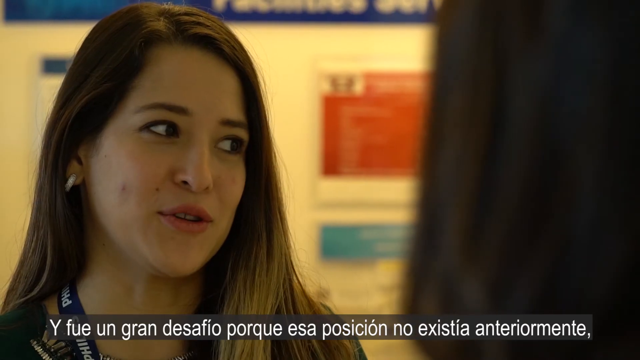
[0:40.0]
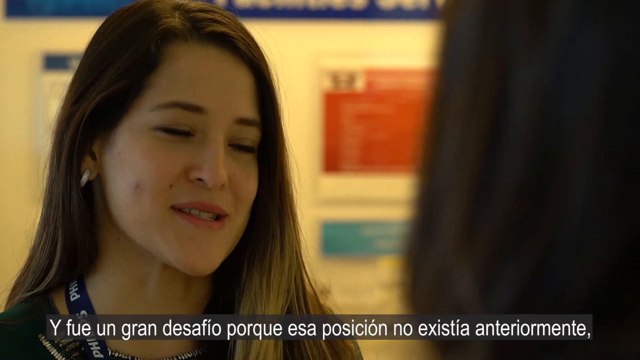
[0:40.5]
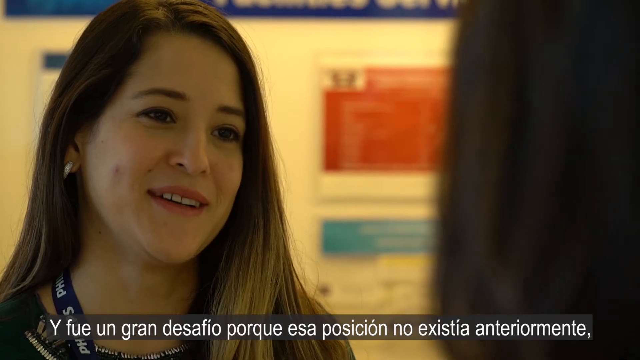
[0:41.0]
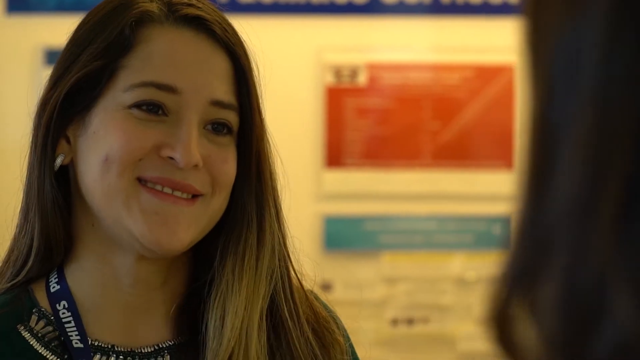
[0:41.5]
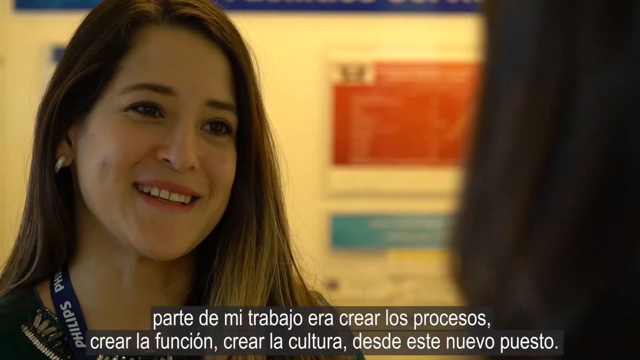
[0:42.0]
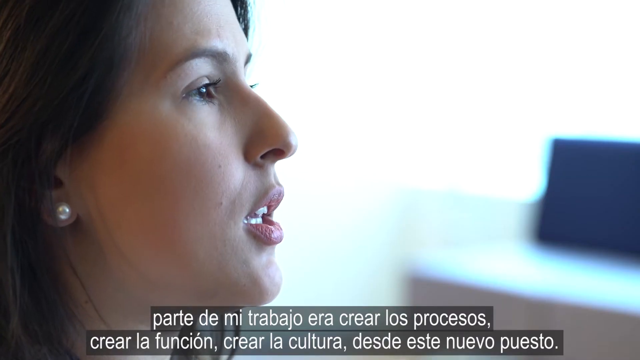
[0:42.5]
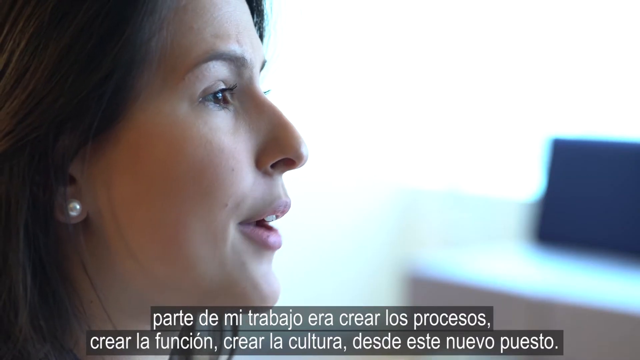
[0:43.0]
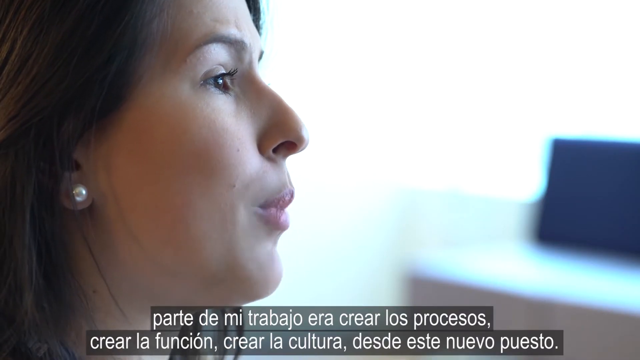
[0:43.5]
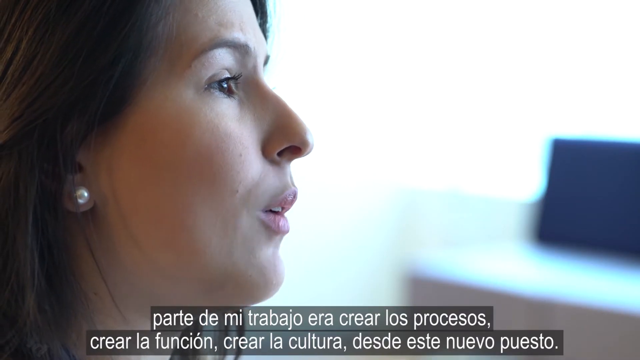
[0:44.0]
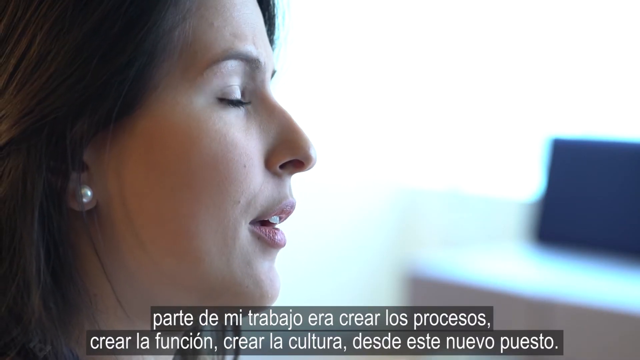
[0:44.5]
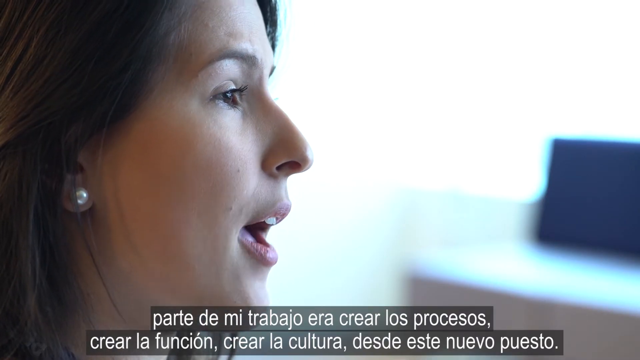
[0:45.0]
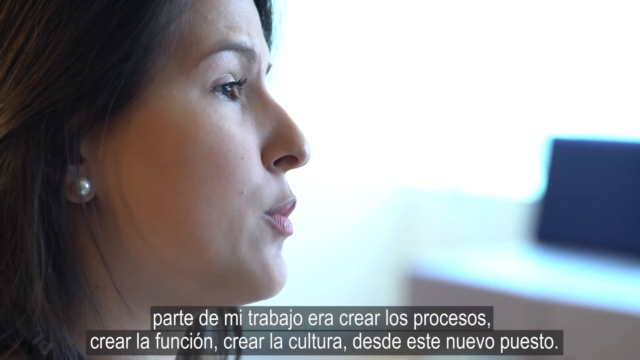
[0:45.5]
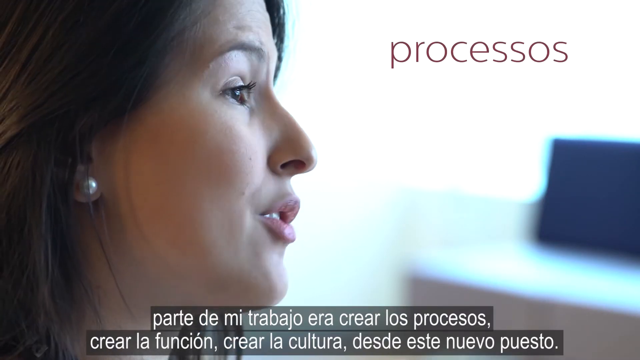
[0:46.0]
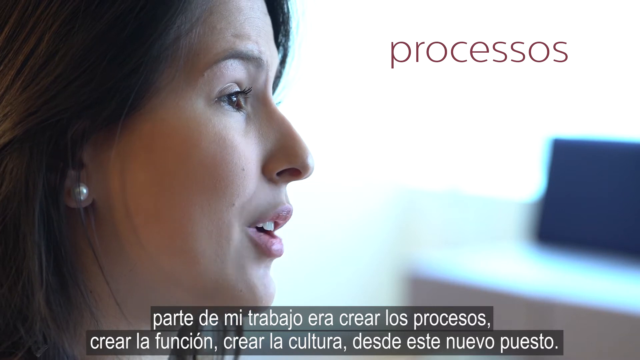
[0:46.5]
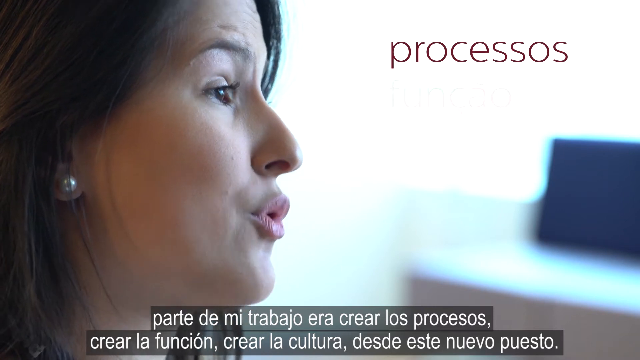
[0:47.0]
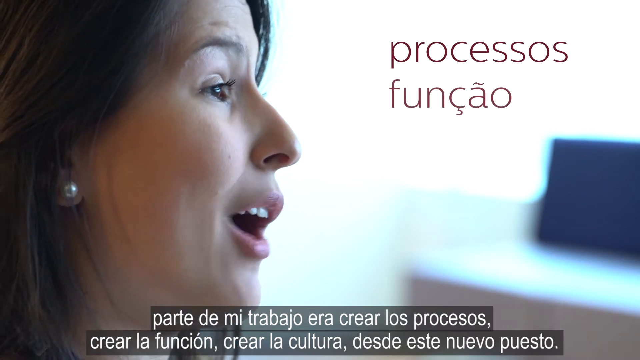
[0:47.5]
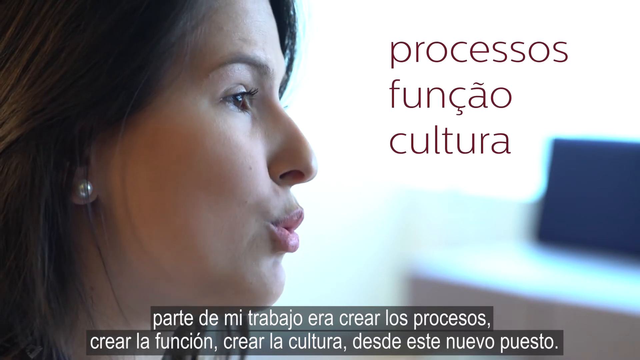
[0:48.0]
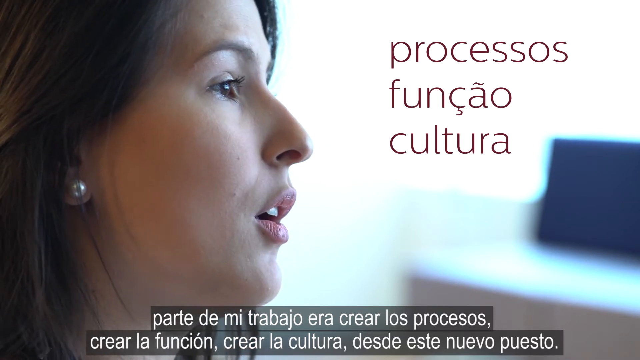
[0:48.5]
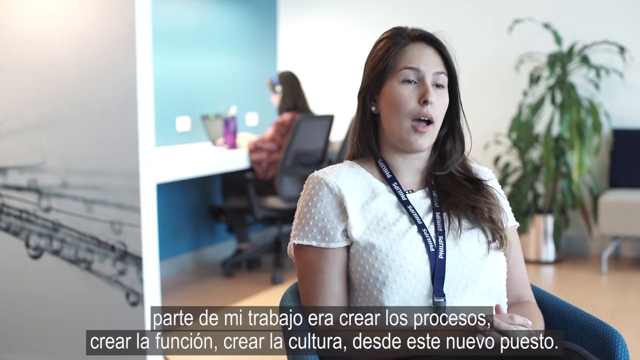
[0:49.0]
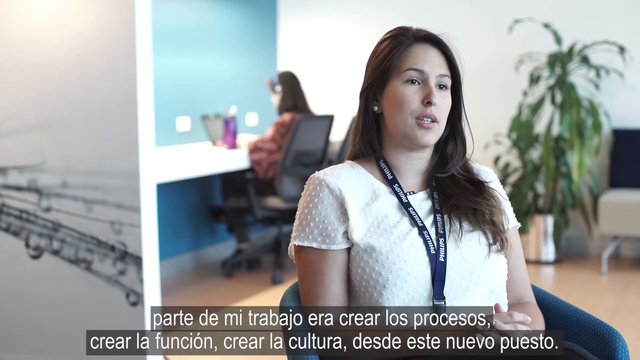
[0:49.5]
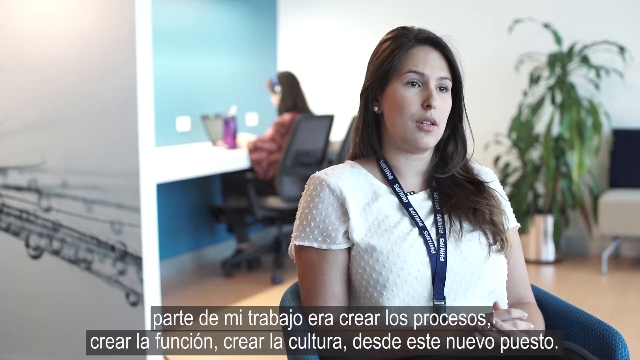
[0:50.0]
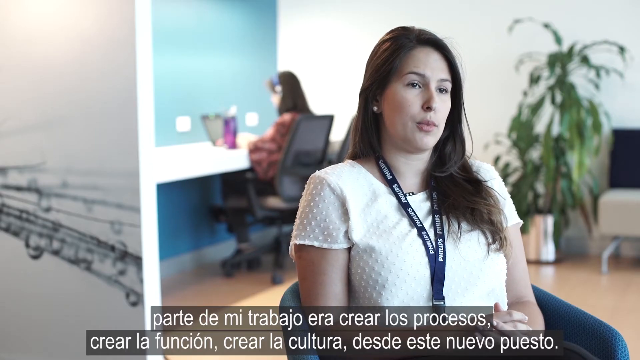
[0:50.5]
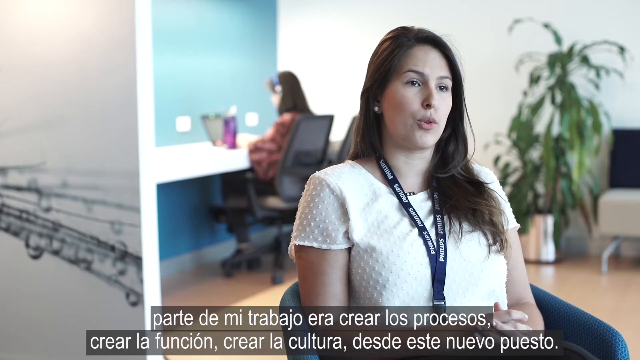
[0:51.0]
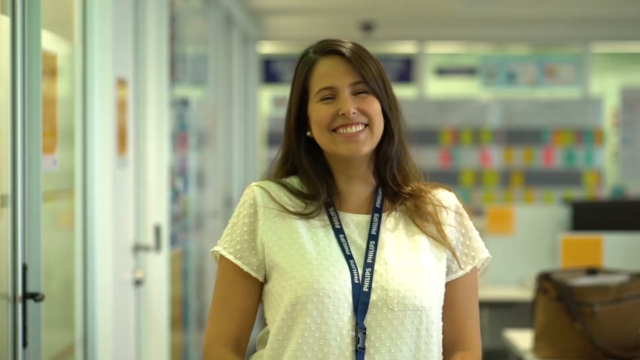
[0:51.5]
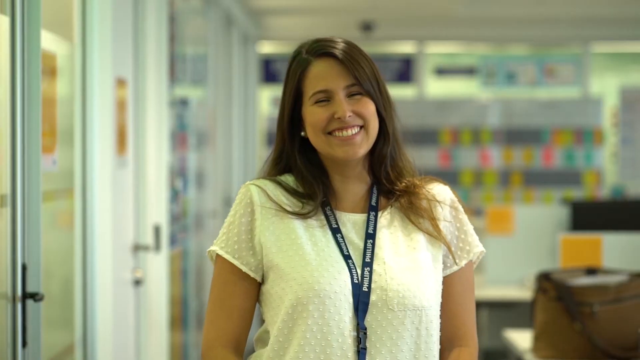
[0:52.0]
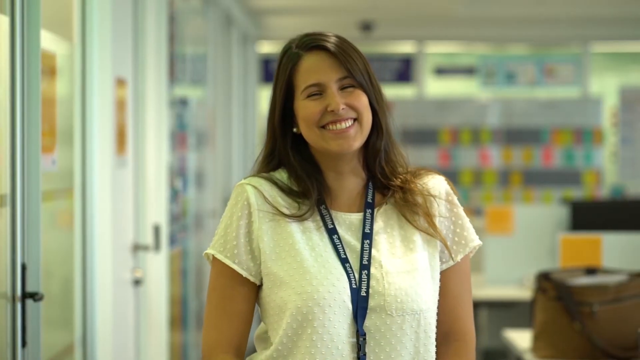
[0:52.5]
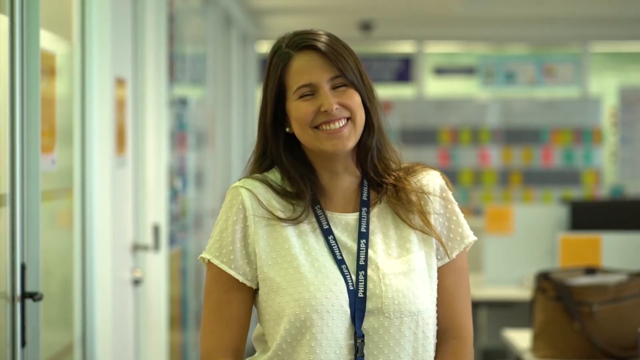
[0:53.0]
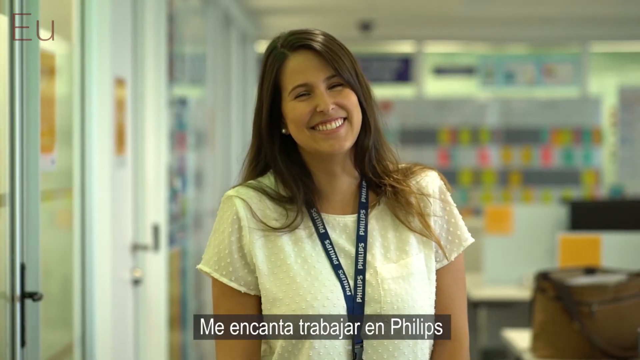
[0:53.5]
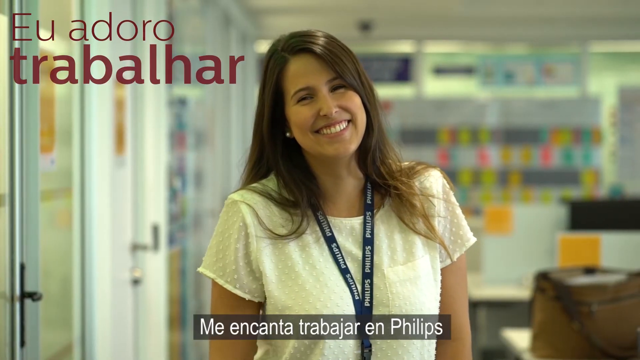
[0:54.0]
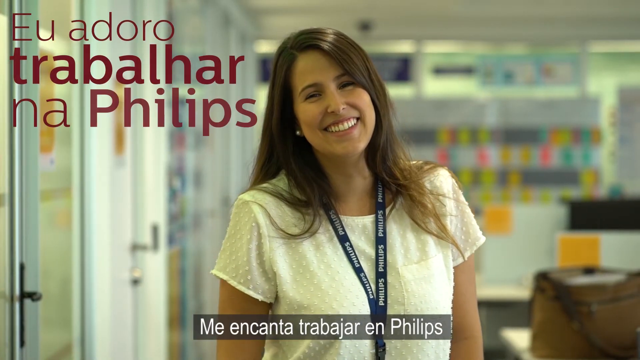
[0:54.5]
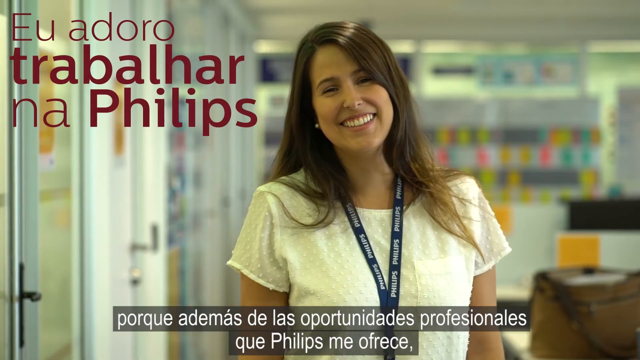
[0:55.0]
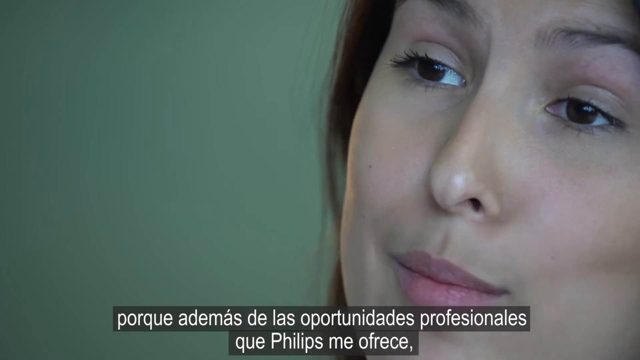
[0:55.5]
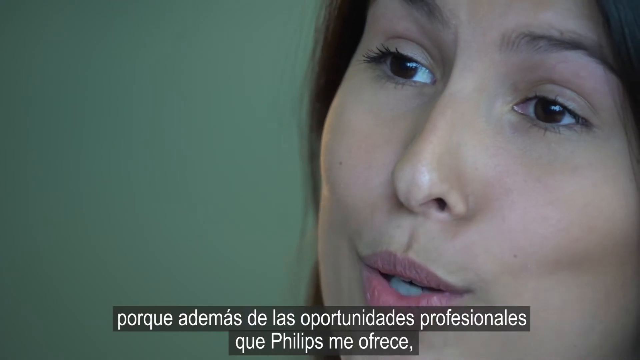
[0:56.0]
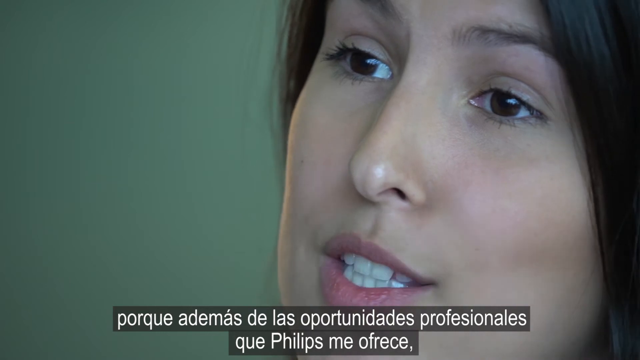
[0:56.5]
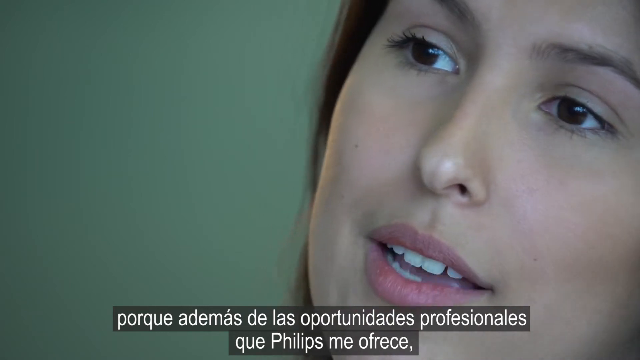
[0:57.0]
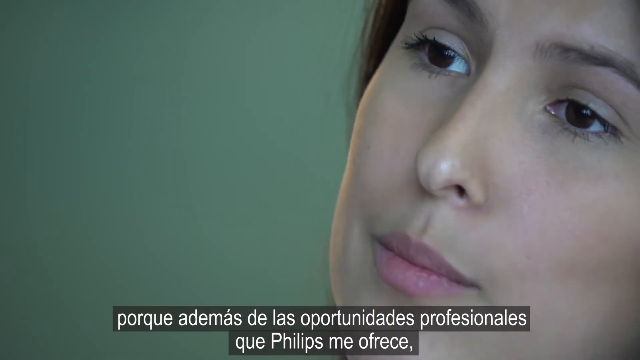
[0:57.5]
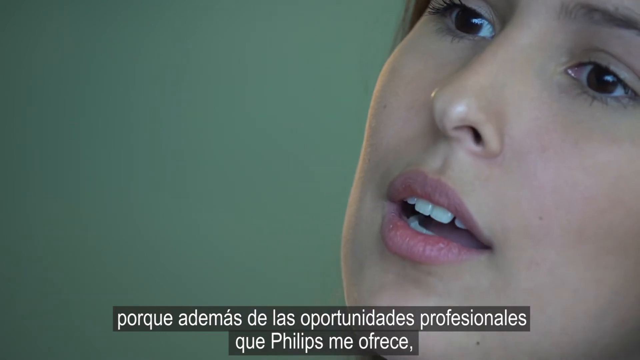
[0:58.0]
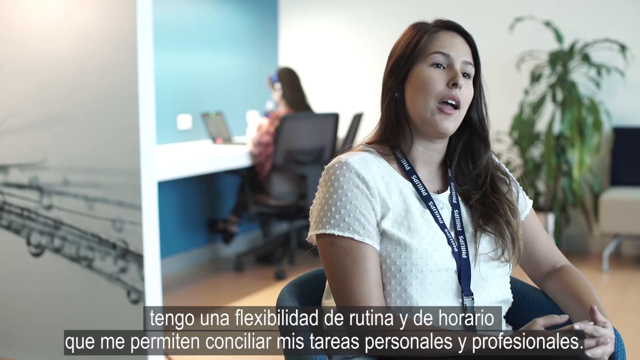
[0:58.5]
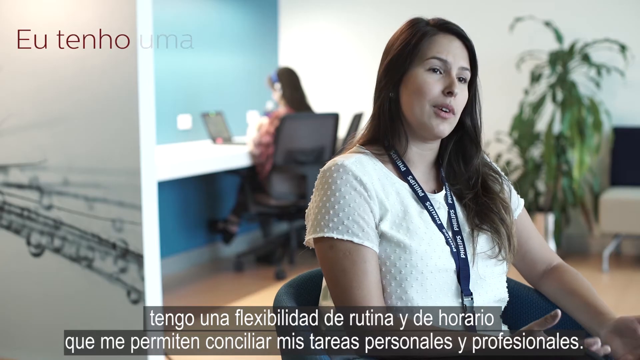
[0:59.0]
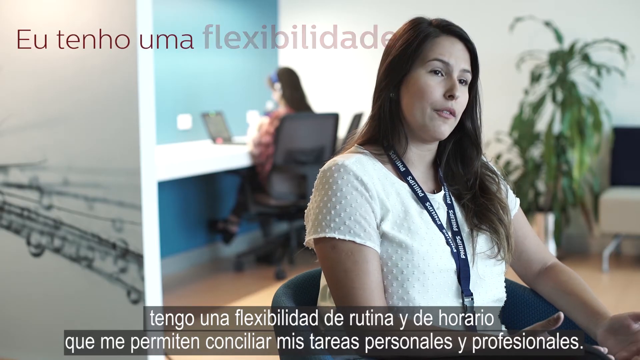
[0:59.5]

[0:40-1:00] A front view shows the woman Anna was speaking to. She wears a silver earring in her right ear and has long, straight, thin dark hair, dark eyebrows, dark eyelashes, brown eyes, a thin flat nose, one medium-sized mole on her right cheek, pink lips, and straight white teeth. She also has a Philips band around her neck. In the background is a white board with blue on top, a red square in the middle, and a light blue square at the bottom center. The shot changes to a side-angle view of Anna's face, with non-English captions at the bottom of the screen; the words "processos", "funcao" and "cultura" appear. The camera pans back to the front of Anna's face in the office with the woman working on a laptop at the white countertop and blue wall, and Anna shrugs her shoulders. The scene then changes to Anna standing in a room surrounded by glass windows and doors with sticky notes on them. She smiles broadly as a bright light shines on her shoulder and chest, and the words "Eu adoro trabalhar na Philips" appear in the upper left corner of the screen.